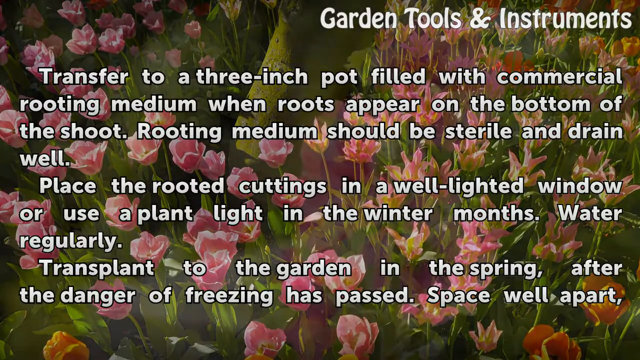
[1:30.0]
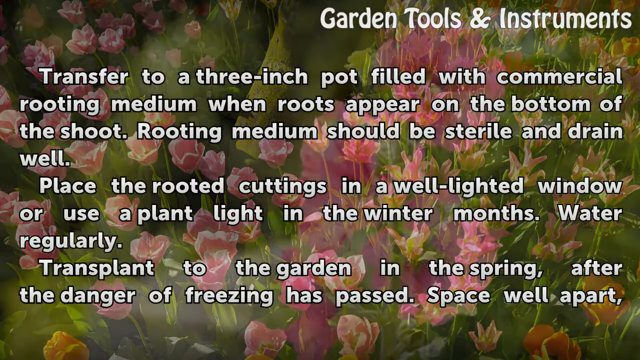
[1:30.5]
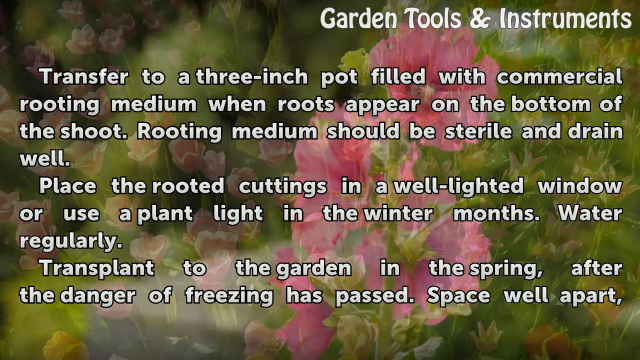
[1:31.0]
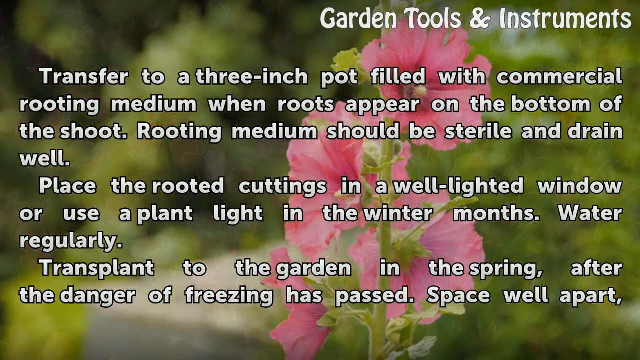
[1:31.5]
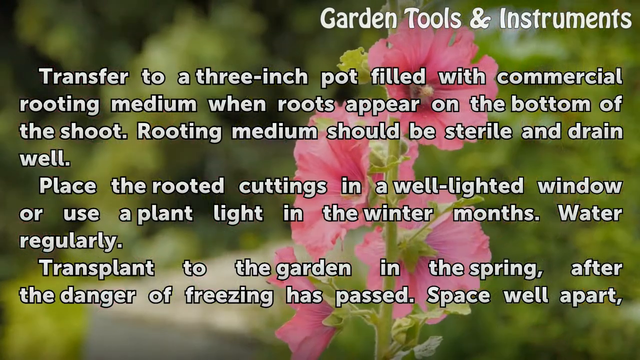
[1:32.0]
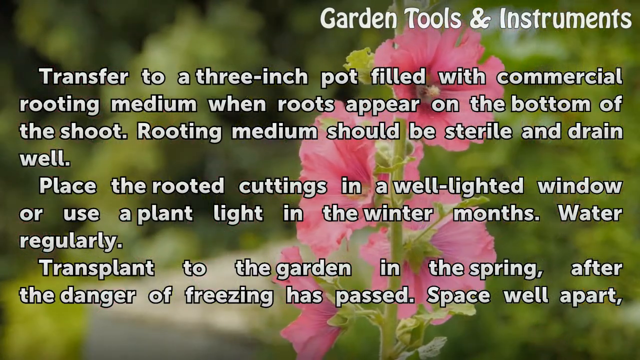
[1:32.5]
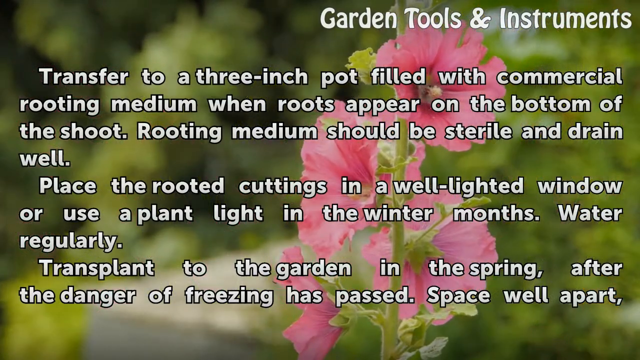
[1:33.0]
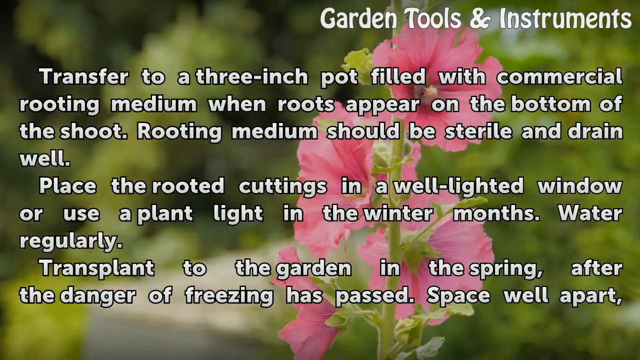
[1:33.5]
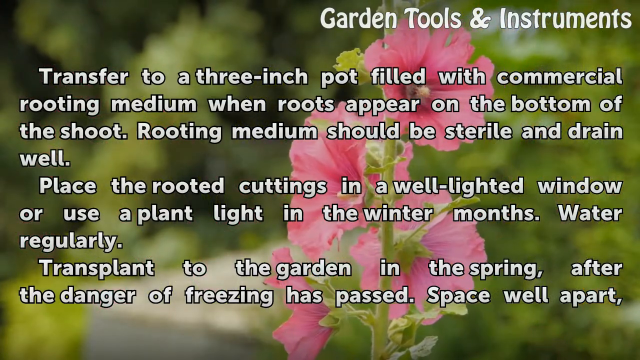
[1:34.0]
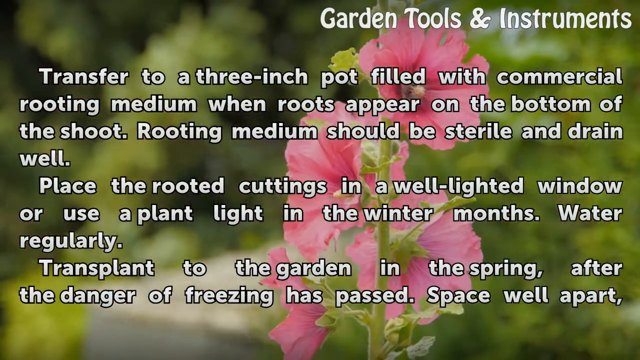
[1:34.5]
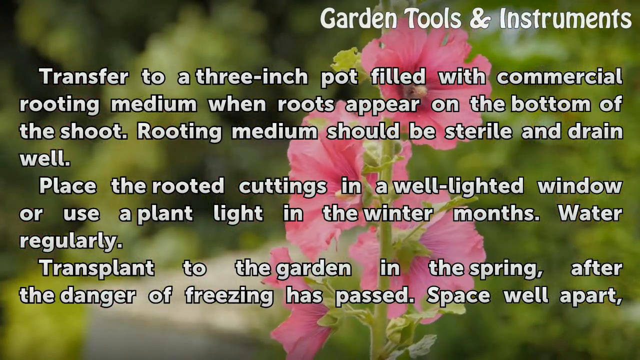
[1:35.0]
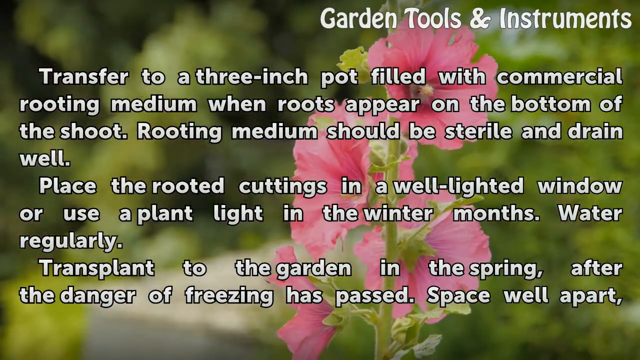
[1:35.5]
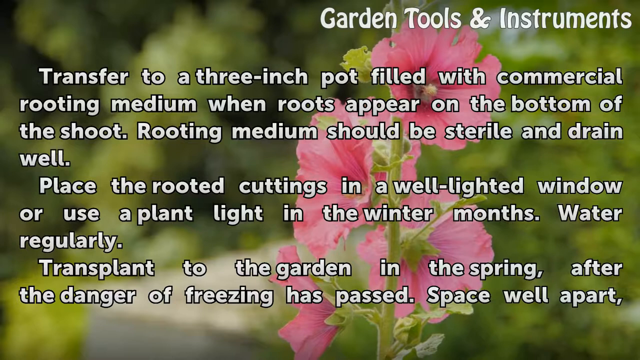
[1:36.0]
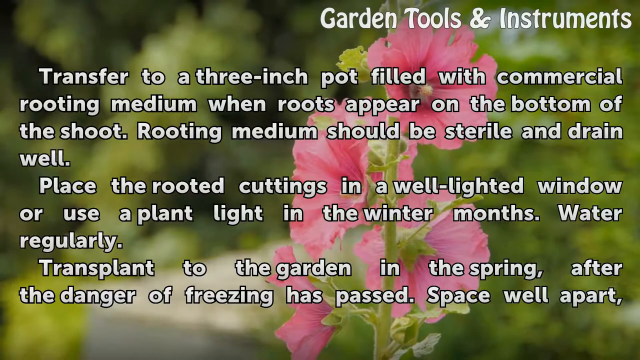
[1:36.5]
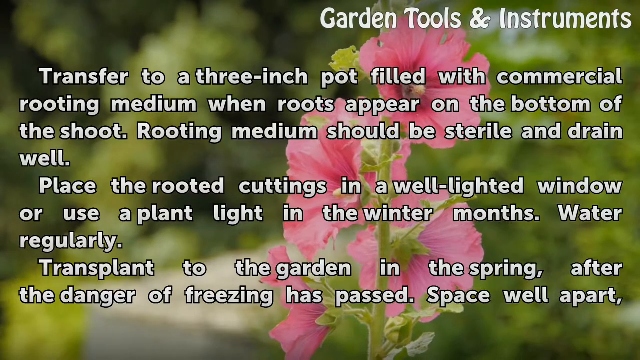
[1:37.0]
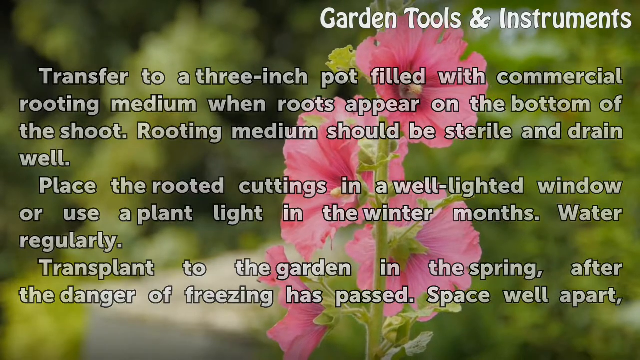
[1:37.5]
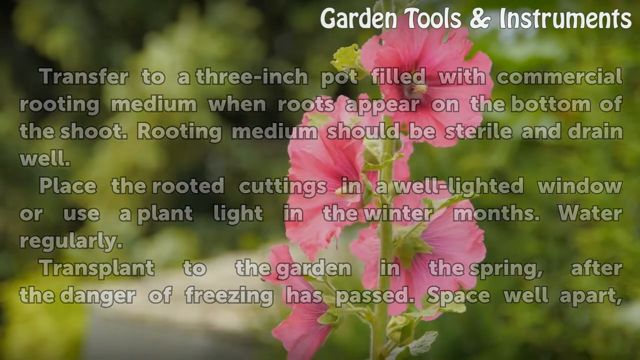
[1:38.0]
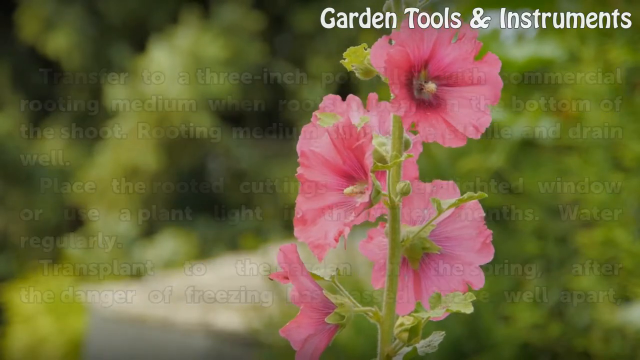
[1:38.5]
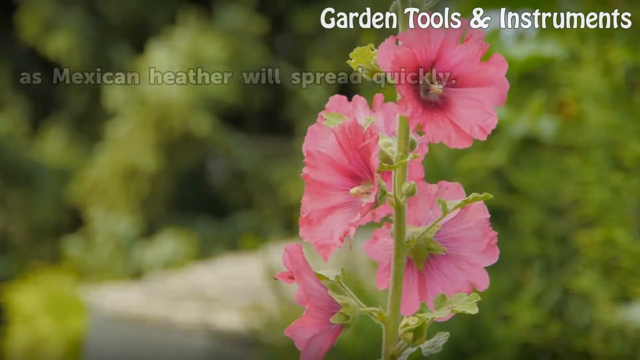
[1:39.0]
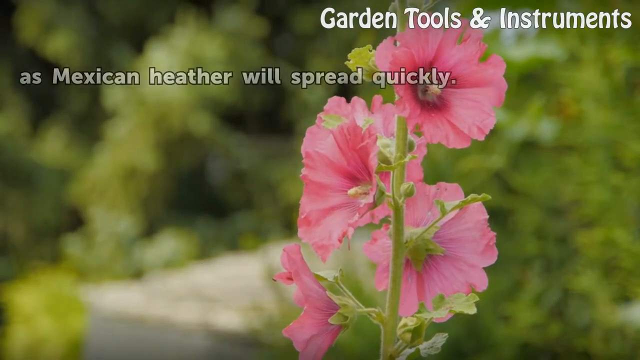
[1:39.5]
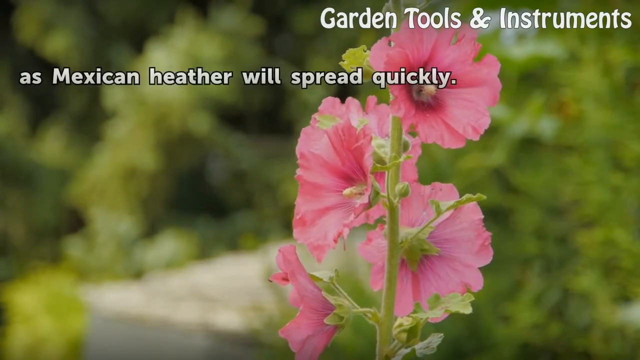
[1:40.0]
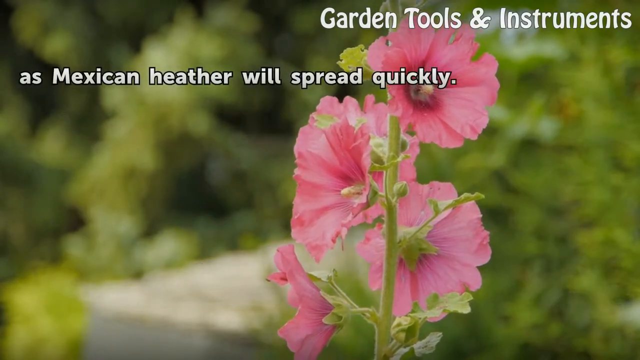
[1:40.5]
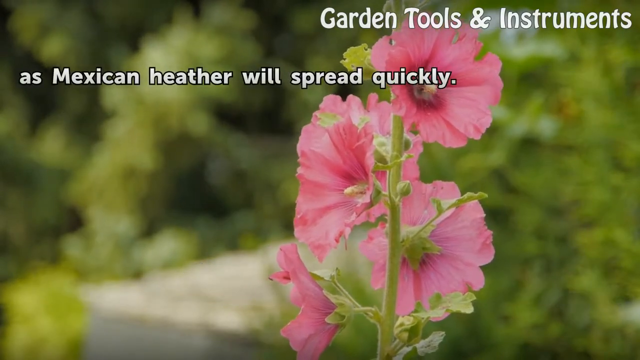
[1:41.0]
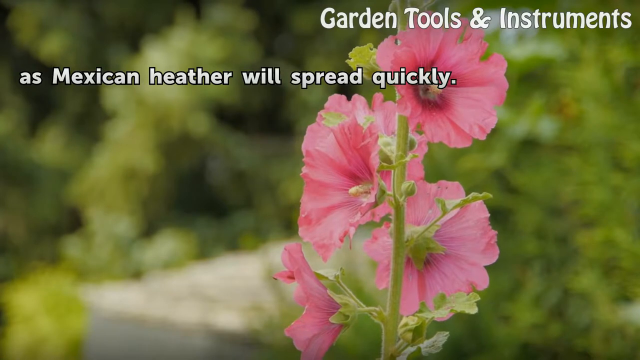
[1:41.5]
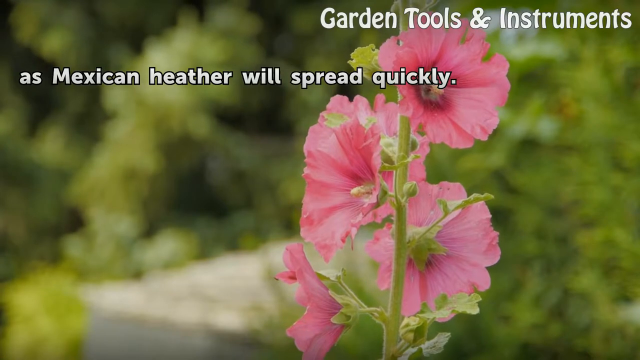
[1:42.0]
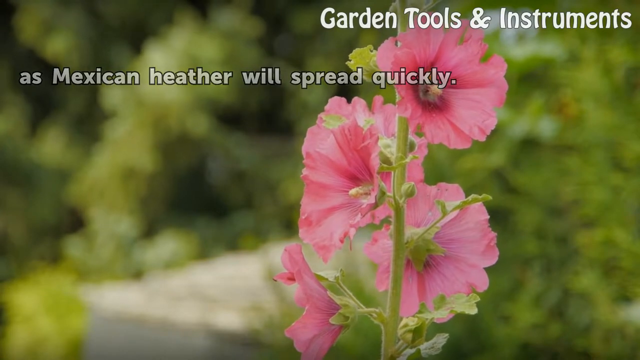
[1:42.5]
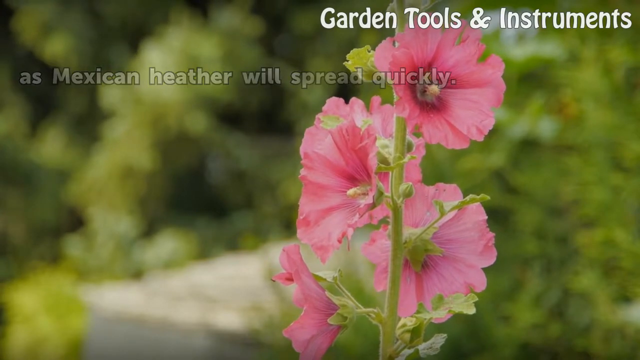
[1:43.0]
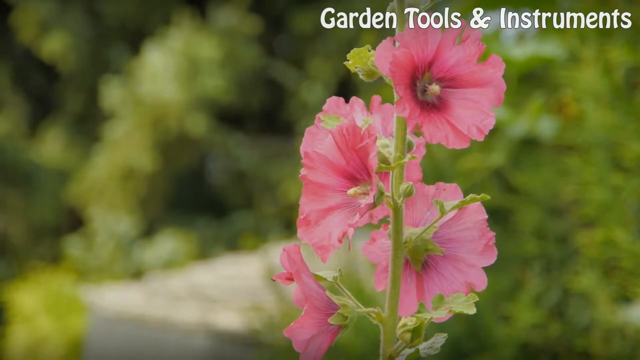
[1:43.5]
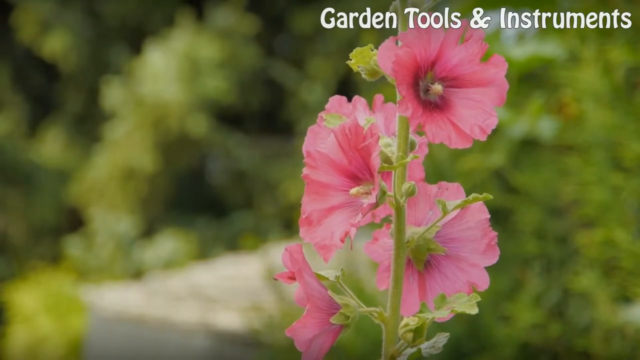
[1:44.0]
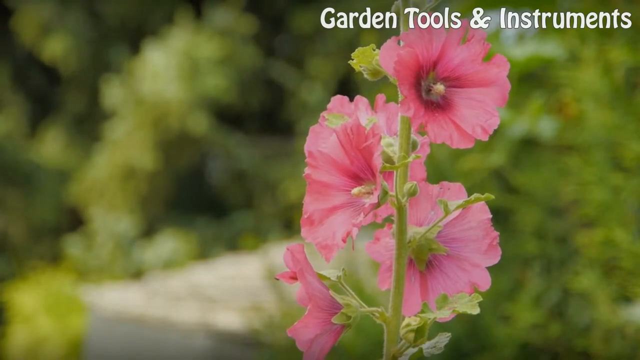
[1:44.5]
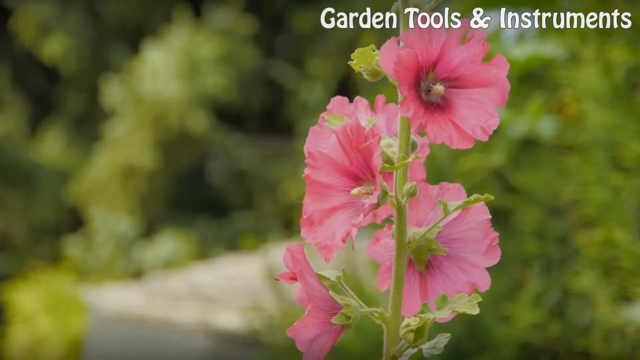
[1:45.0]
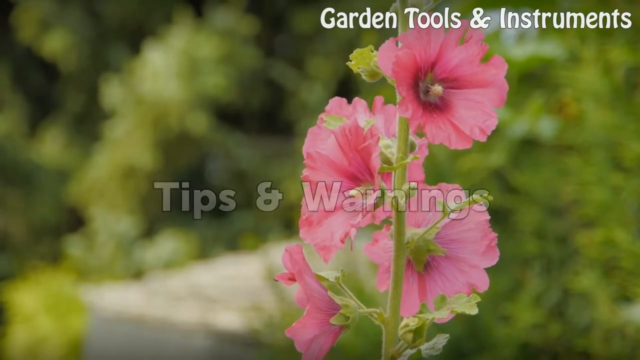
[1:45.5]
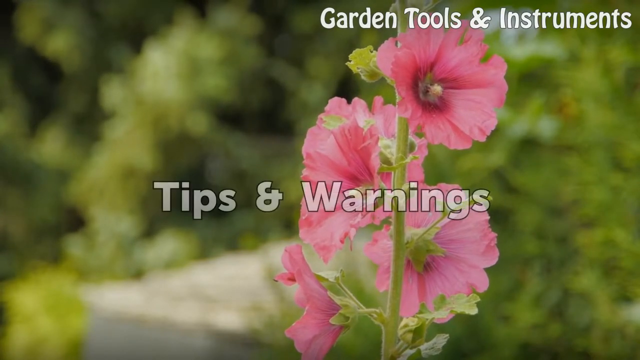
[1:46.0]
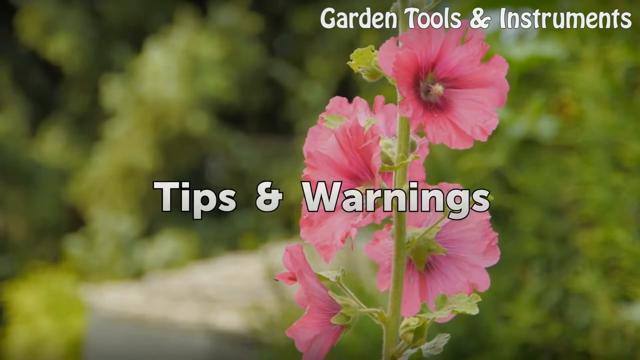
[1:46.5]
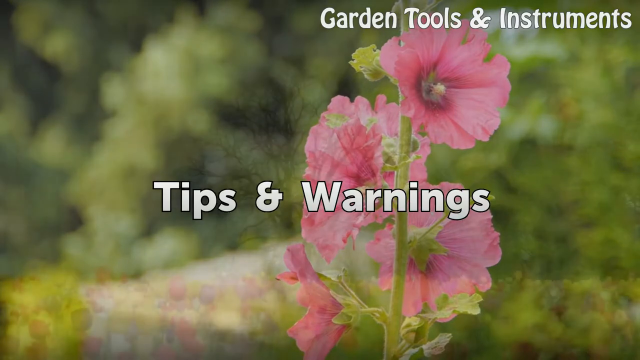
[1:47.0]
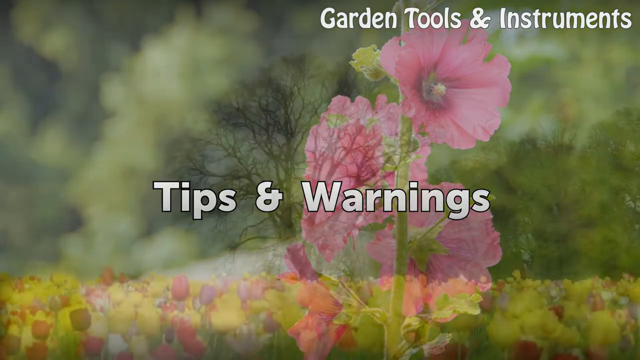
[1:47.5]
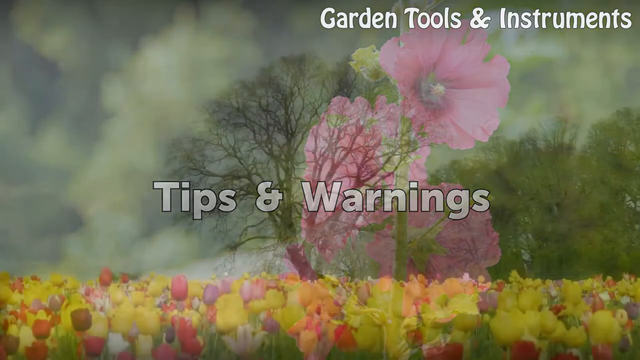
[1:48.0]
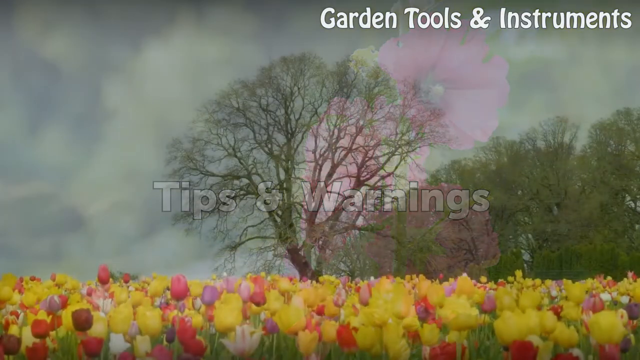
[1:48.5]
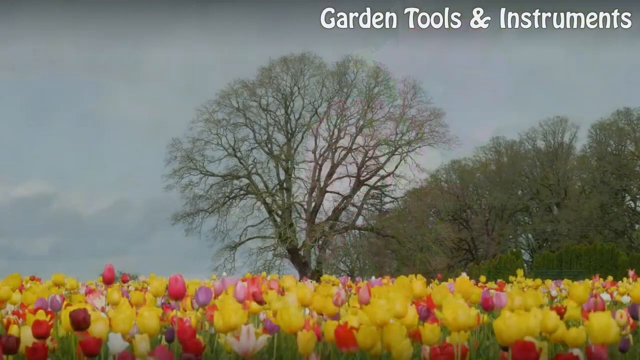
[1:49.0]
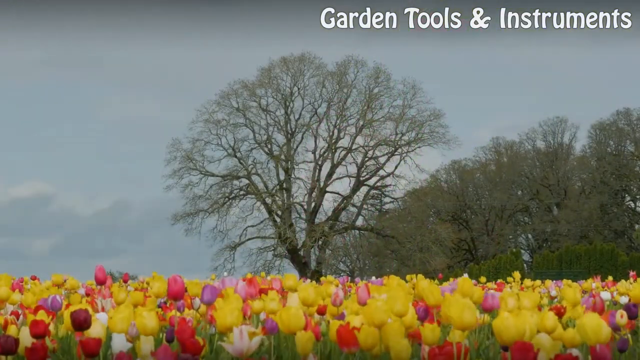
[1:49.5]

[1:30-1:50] Lots of pink flowers sway slowly in the wind in the background, with white text superimposed: "transfer to a three inch pot filled with commercial rooting medium when roots appear on the bottom of the shoot rooting medium should be sterile and drained well place the rooted cuttings in a well-lighted window or use a plant light in the winter months water regularly transplant to the garden in the spring after the danger of freezing has passed space well apart". The background then changes to a close-up of a single pink flower with a green stem, and white text appears reading "as Mexican heather will spread quickly". That text disappears, and in the center of the screen the words "tips and warnings" appear in white with a fine black border. White text reading "garden tools and instruments" remains in the top right corner for the entire video.